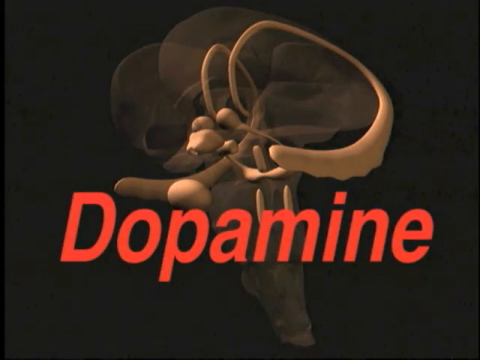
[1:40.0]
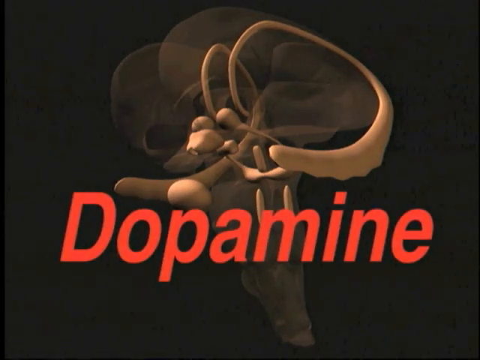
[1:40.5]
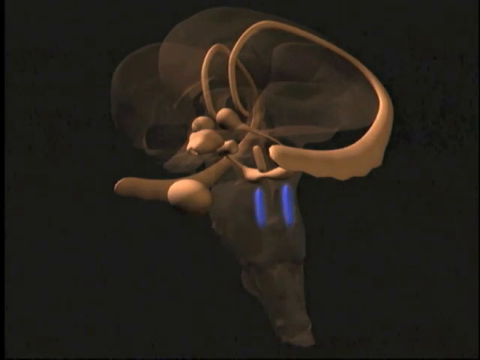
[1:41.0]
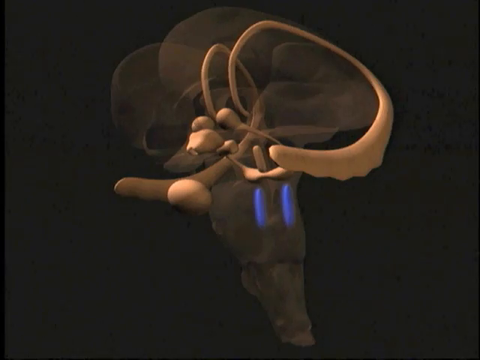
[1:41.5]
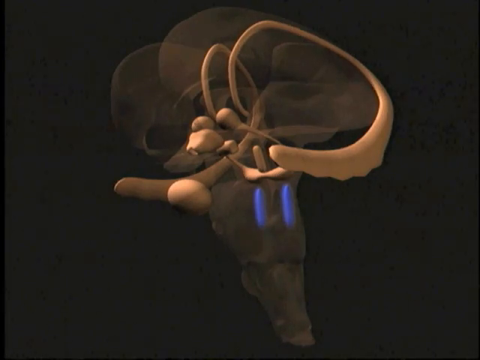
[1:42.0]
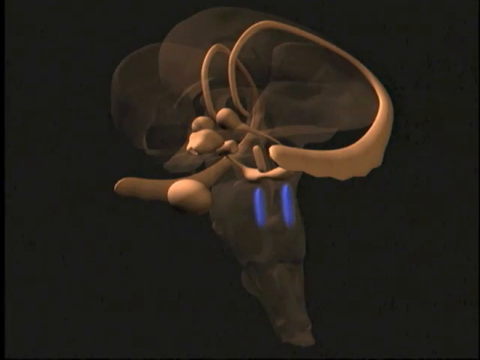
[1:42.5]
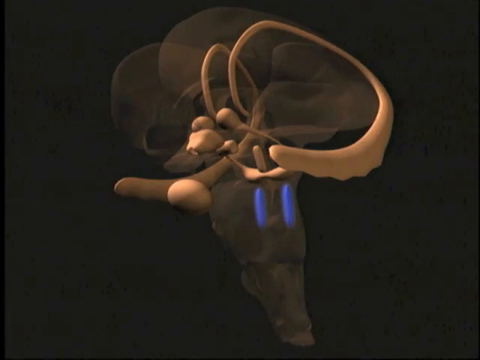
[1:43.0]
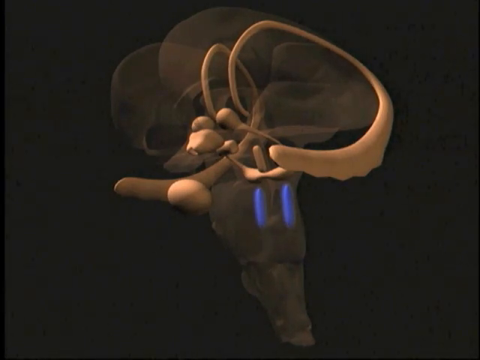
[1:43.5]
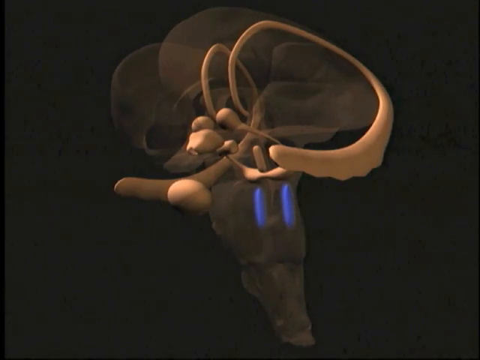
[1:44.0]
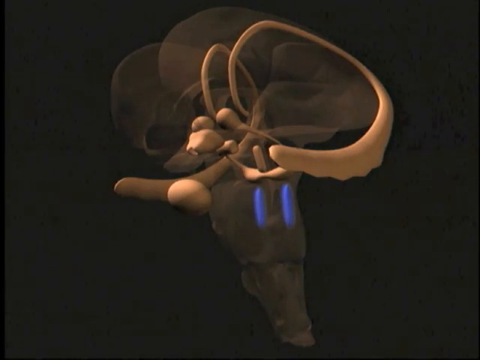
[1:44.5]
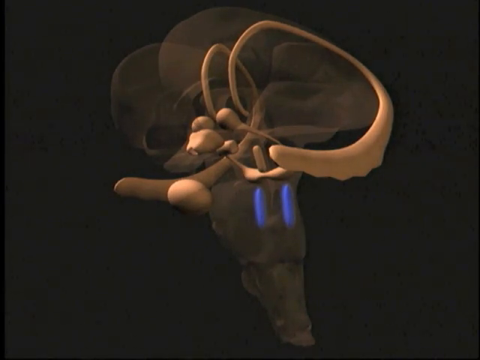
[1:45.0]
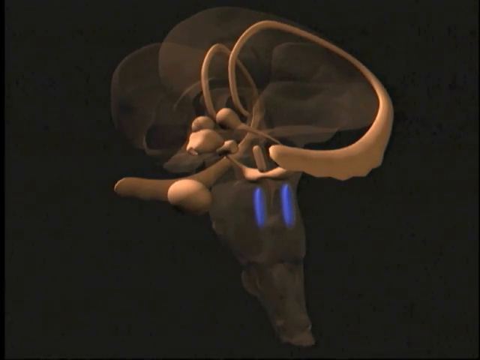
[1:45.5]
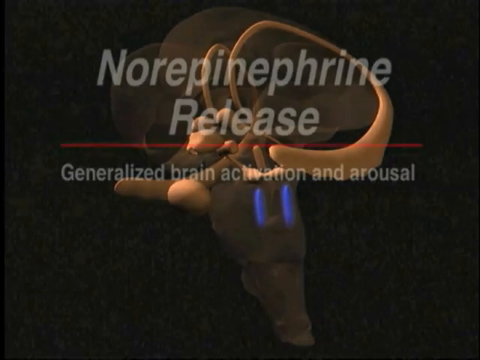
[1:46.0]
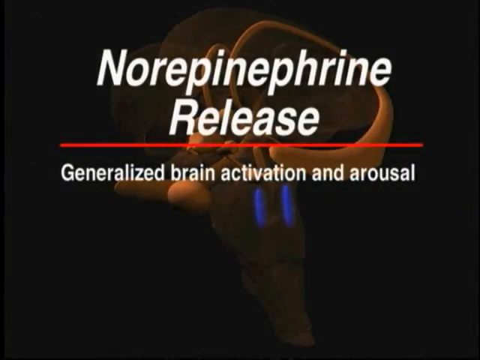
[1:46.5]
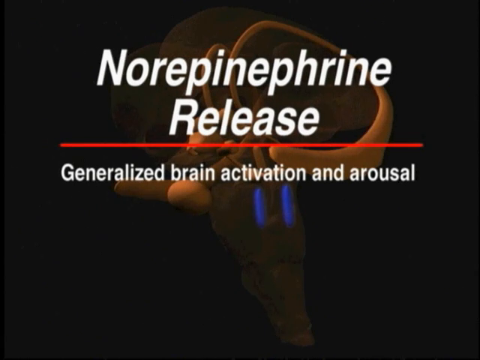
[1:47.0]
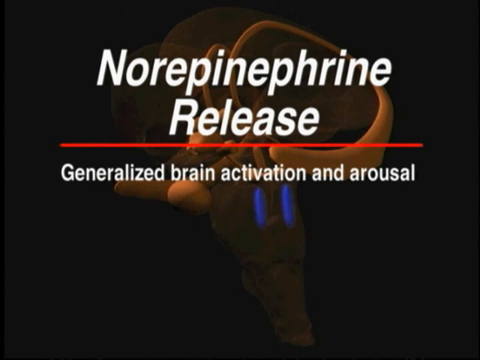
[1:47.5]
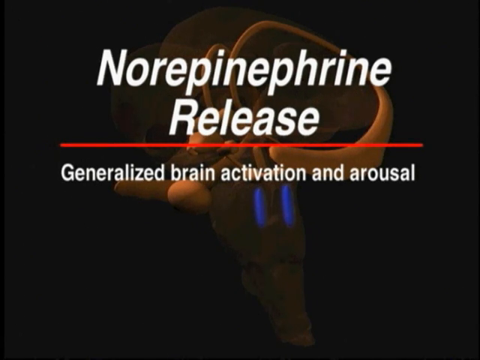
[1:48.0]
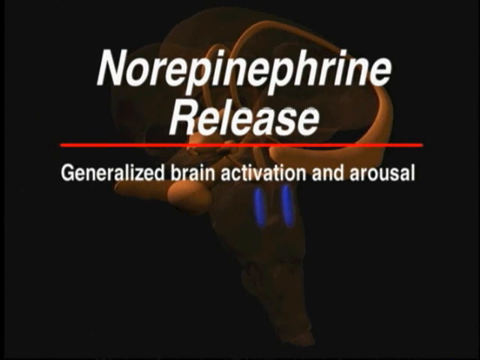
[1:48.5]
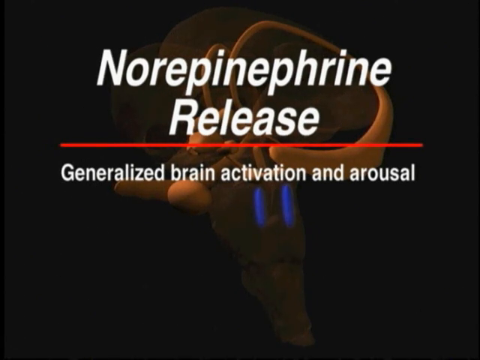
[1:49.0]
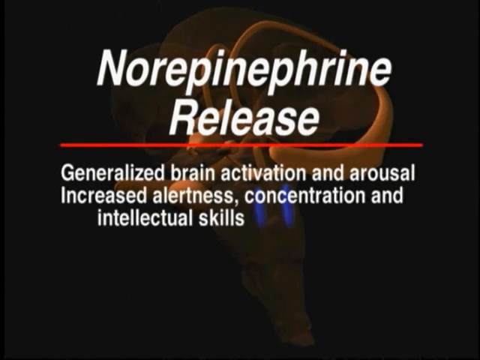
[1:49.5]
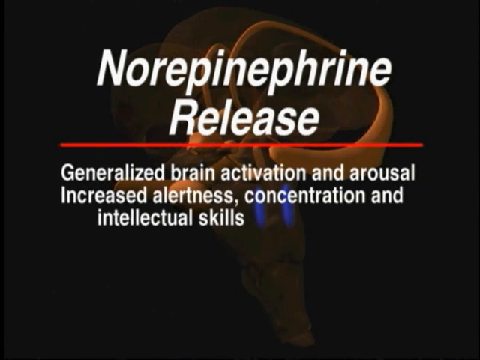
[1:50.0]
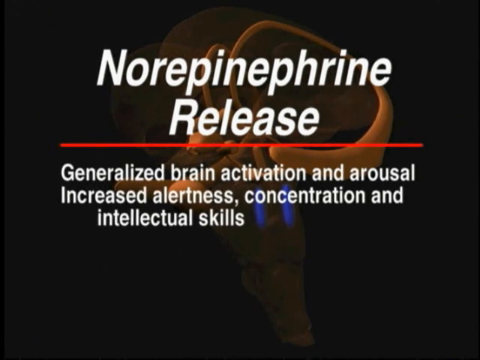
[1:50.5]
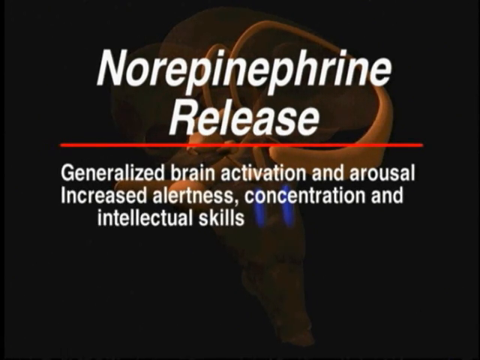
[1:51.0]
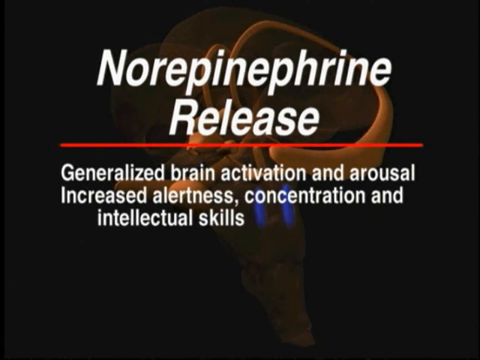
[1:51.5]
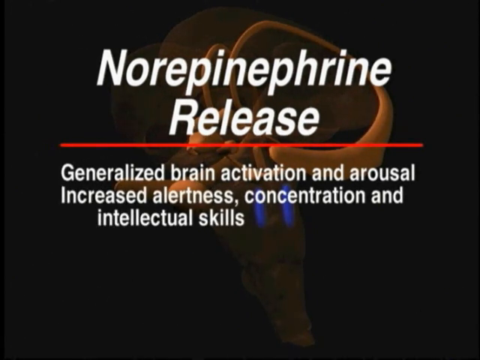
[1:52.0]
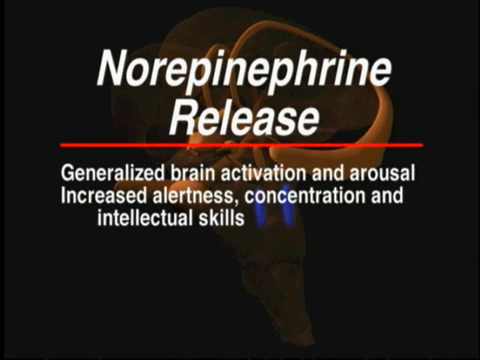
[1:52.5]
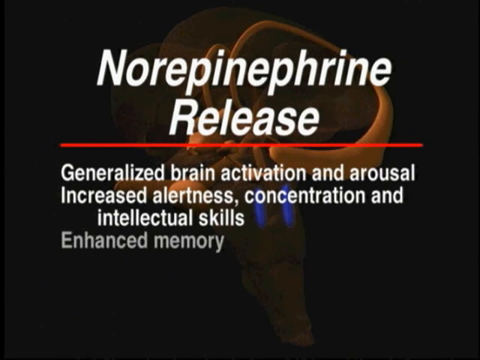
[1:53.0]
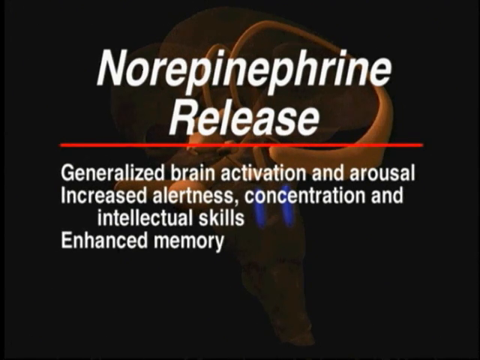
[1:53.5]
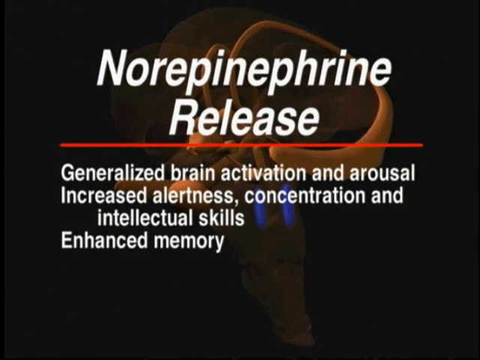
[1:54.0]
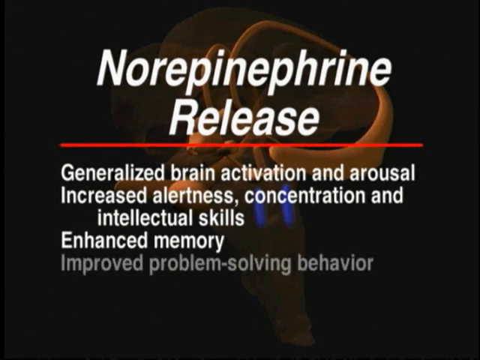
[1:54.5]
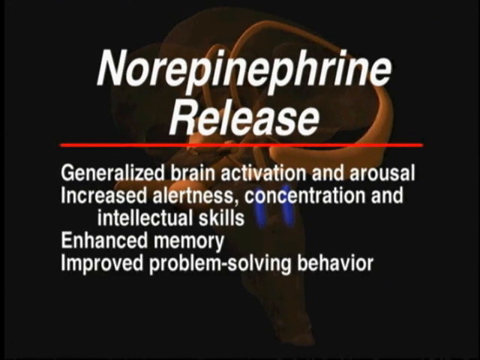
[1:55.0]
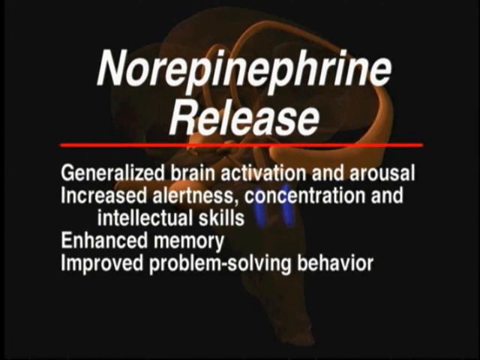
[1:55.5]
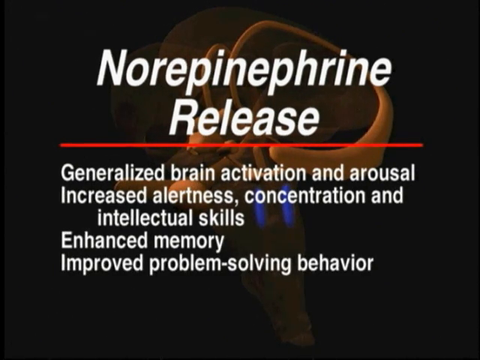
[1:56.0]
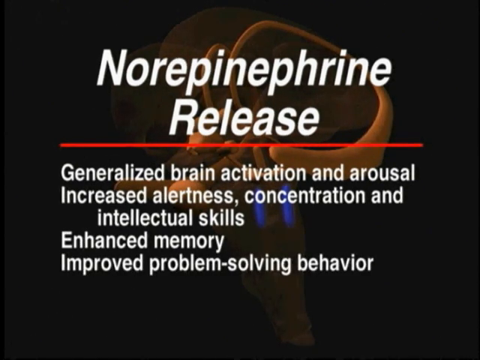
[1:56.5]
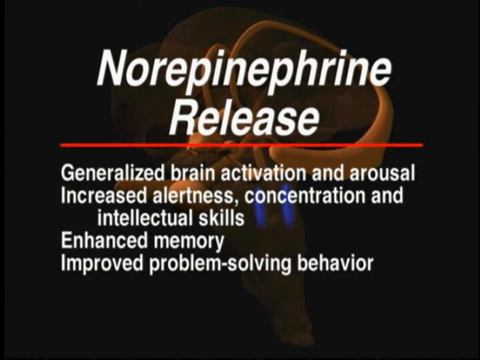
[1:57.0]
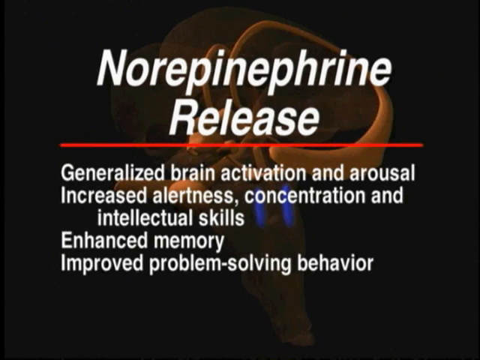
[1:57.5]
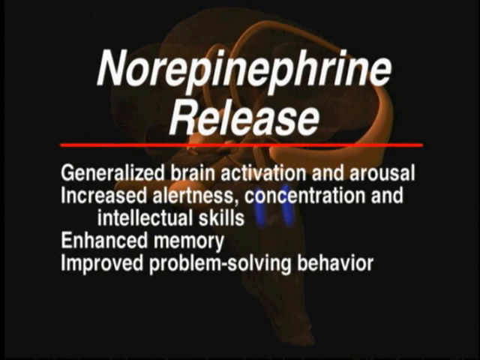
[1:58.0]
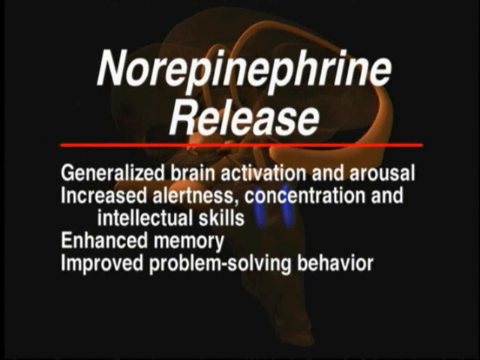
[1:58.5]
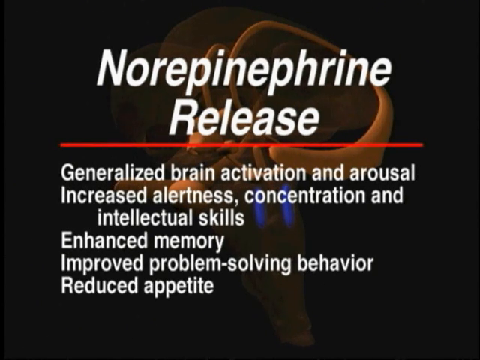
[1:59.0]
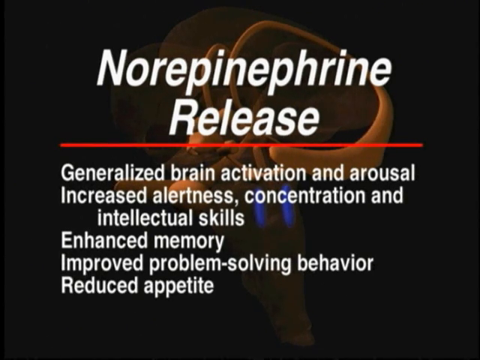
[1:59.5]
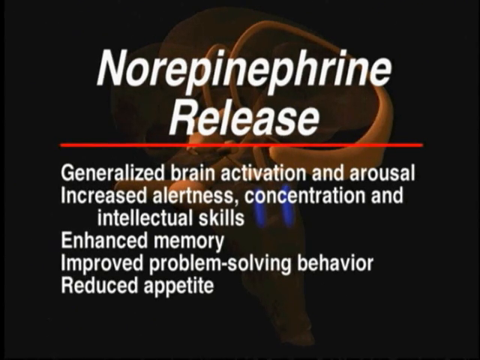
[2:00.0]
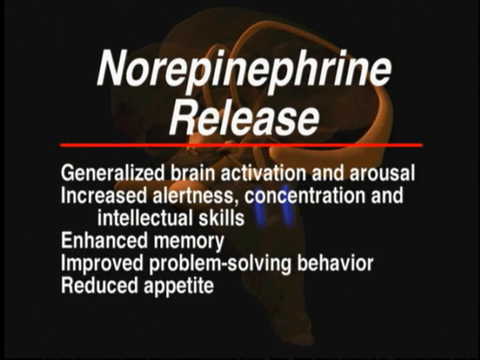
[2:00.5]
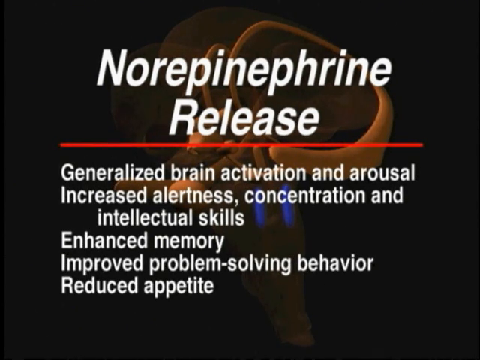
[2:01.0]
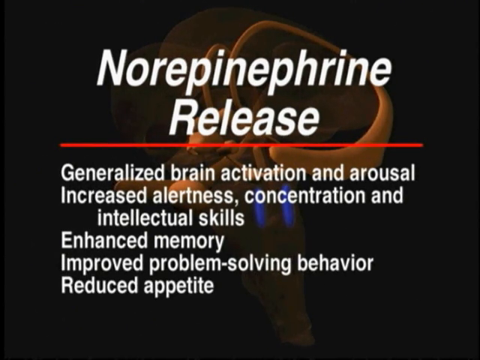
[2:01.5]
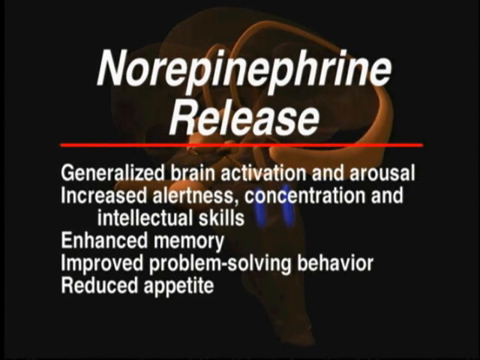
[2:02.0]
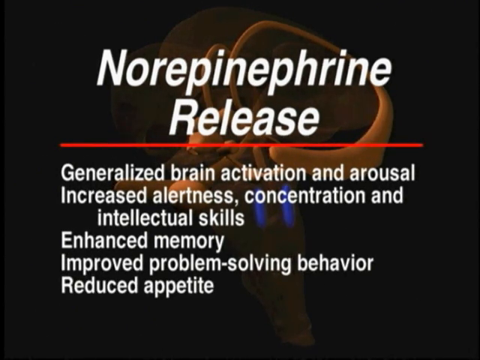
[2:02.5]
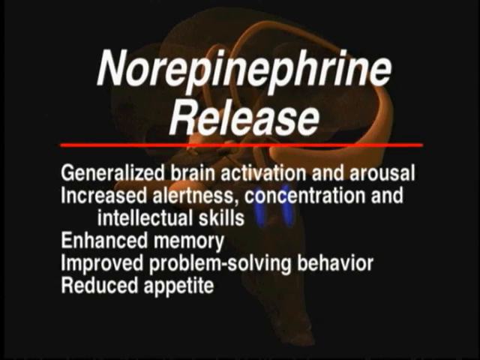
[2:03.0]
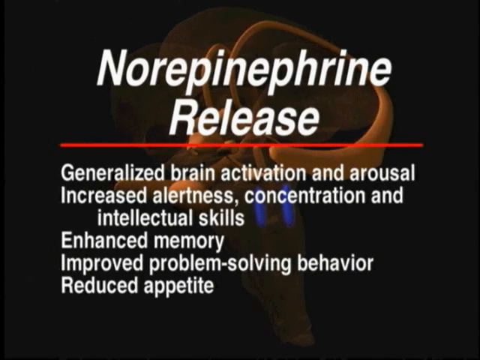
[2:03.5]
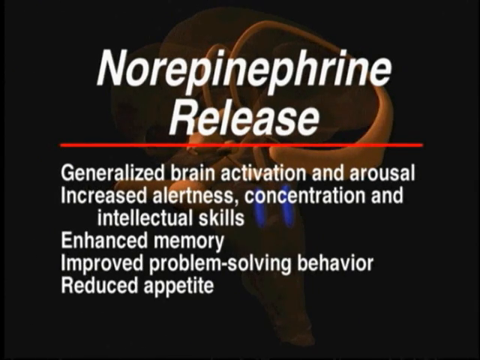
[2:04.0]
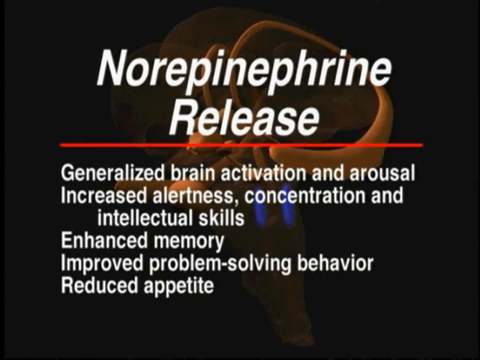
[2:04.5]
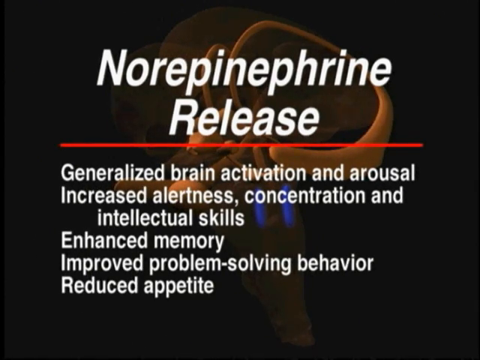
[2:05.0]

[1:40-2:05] The red "dopamine" text is visible, and other receptors appear underneath to the right with text reading "norepinephrine release, generalized brain activation and arousal, increased alertness, concentration, intellectual skills, enhanced memory, improved problem-solving behavior, reduced appetite". The video ends abruptly there.